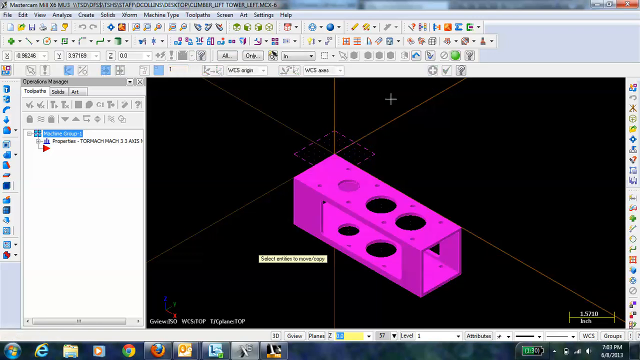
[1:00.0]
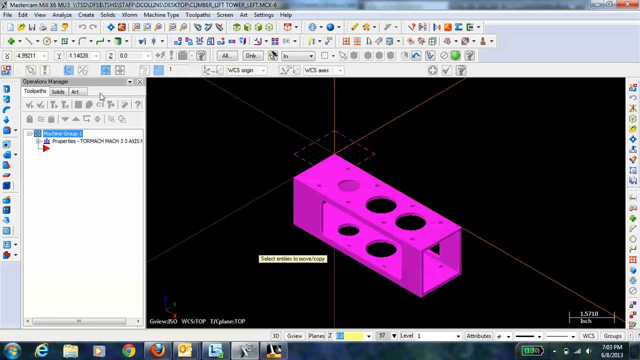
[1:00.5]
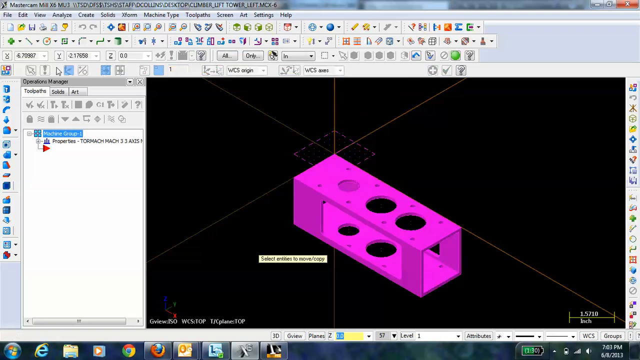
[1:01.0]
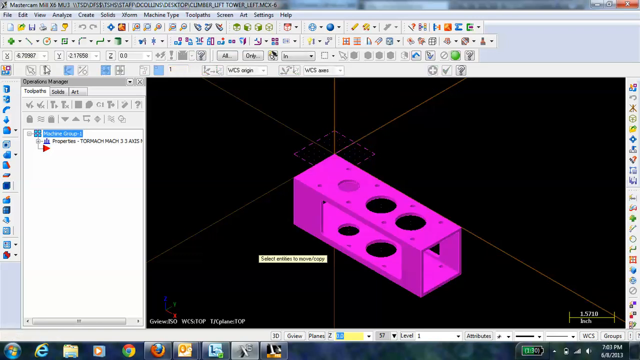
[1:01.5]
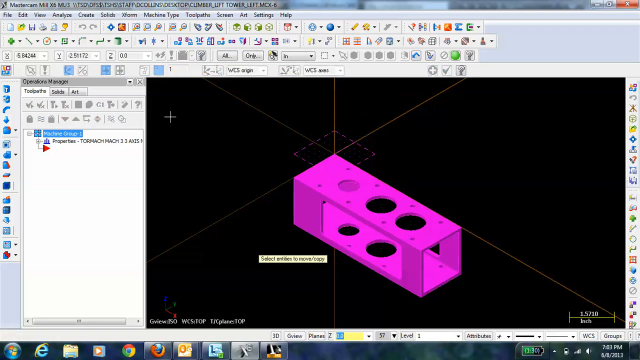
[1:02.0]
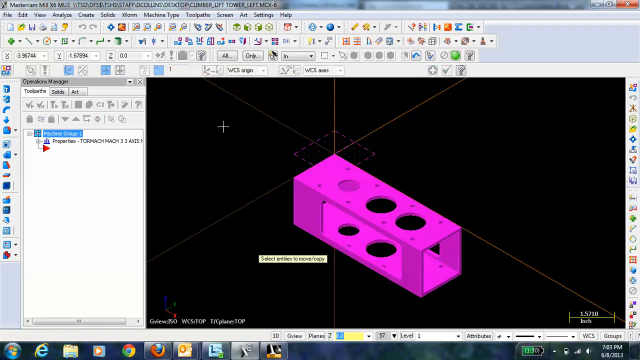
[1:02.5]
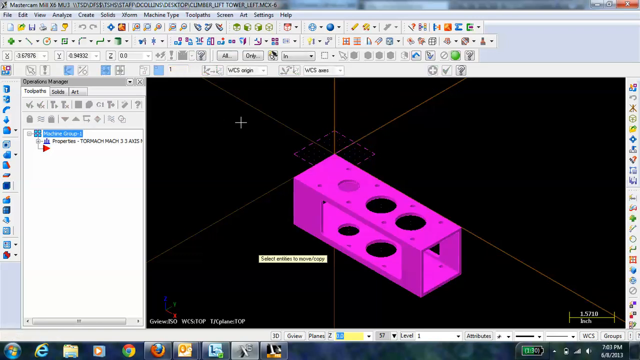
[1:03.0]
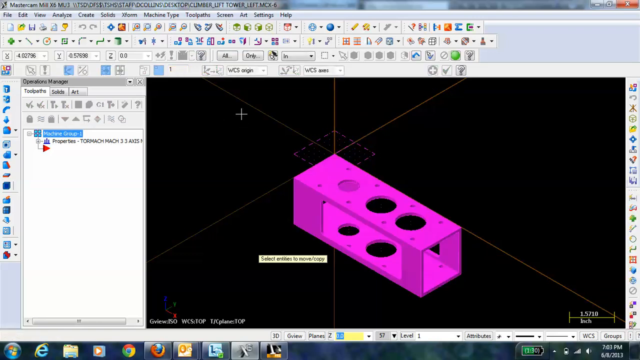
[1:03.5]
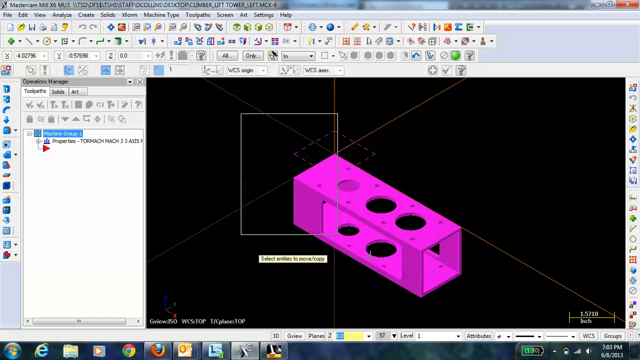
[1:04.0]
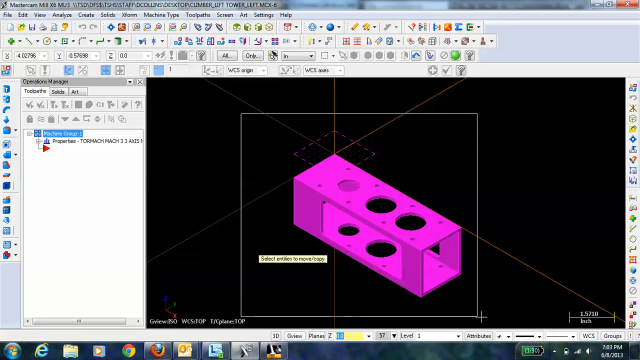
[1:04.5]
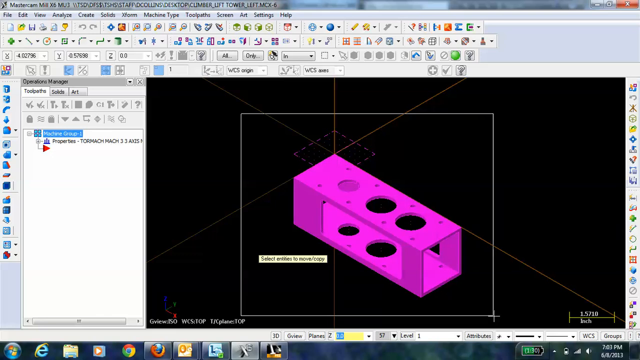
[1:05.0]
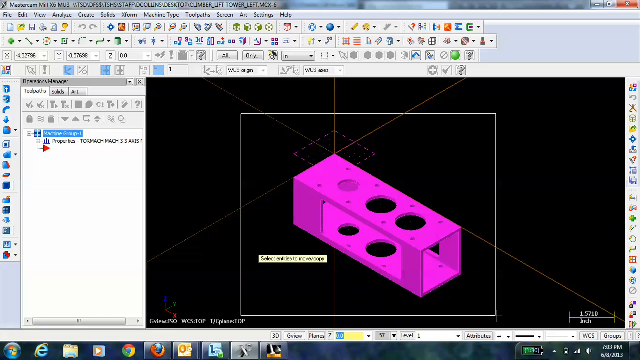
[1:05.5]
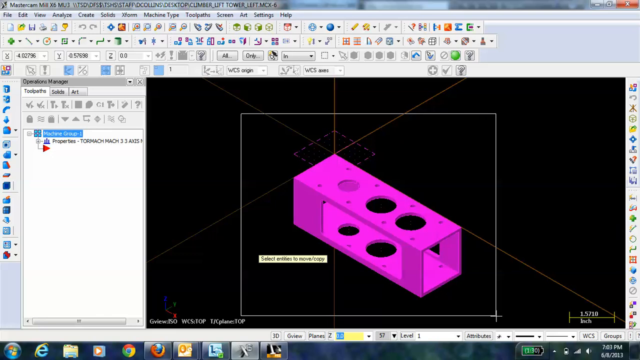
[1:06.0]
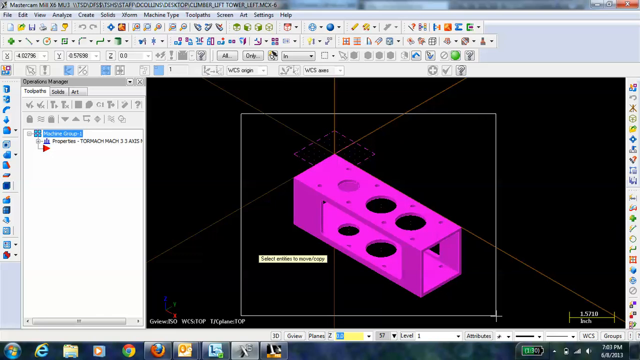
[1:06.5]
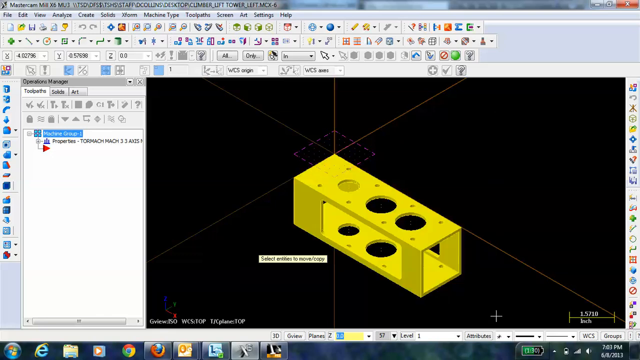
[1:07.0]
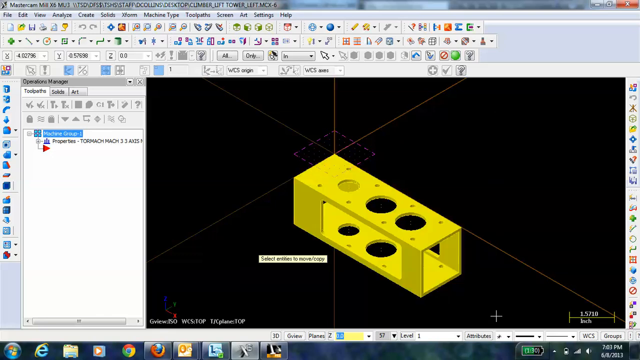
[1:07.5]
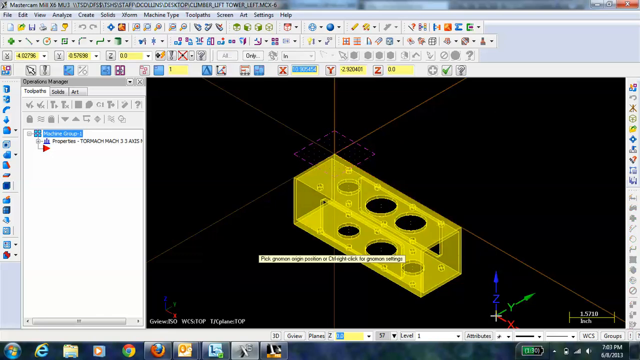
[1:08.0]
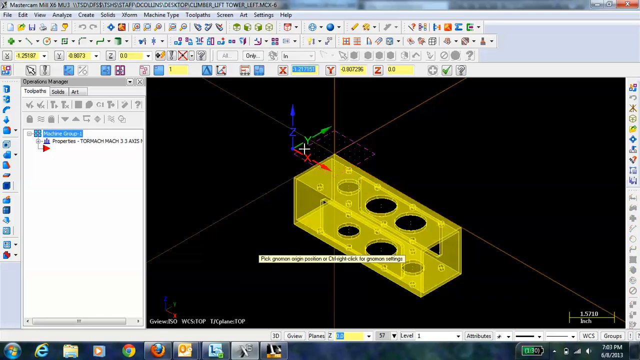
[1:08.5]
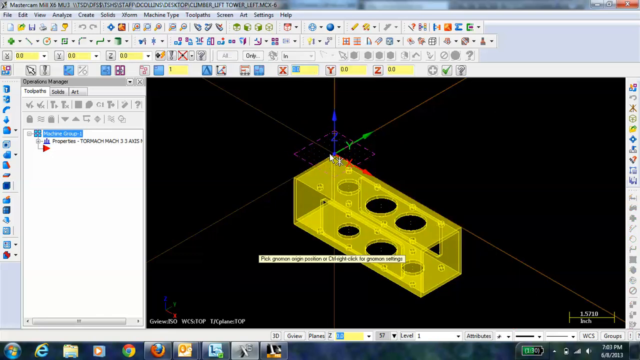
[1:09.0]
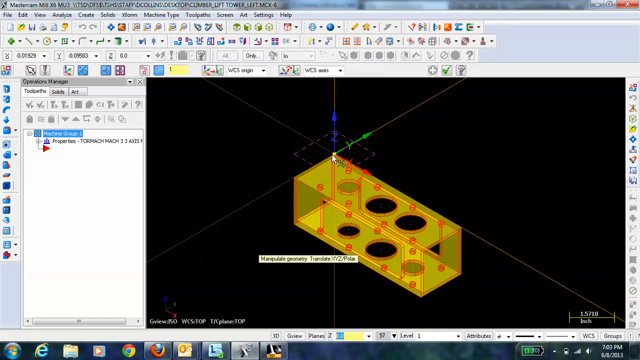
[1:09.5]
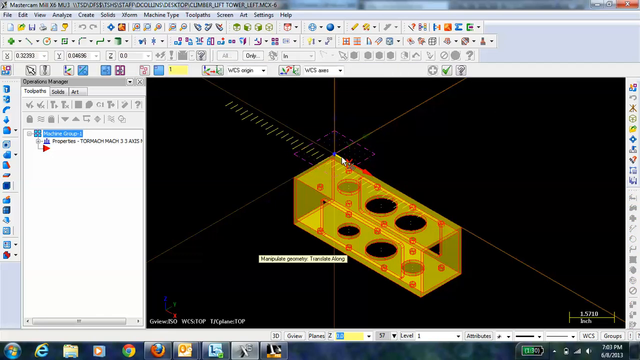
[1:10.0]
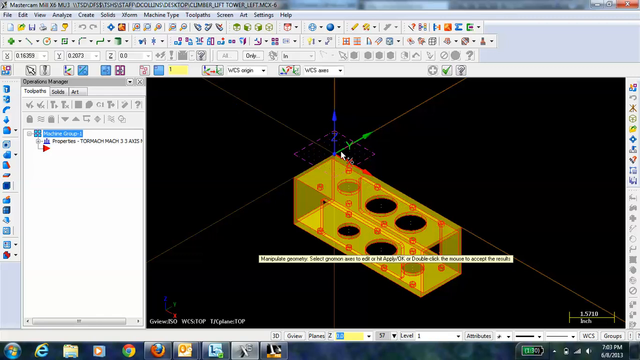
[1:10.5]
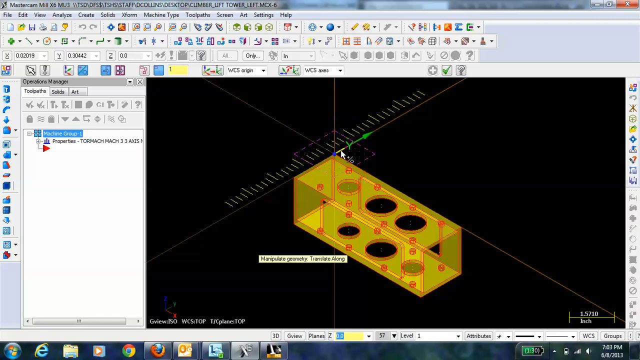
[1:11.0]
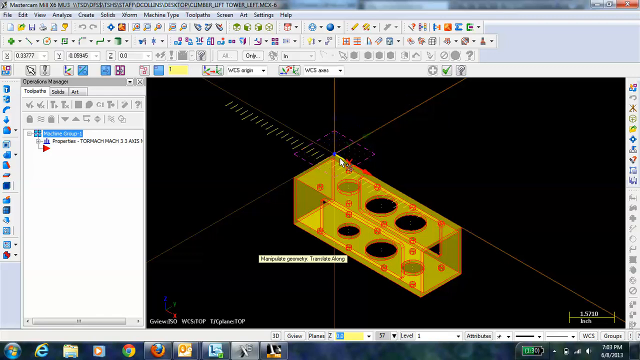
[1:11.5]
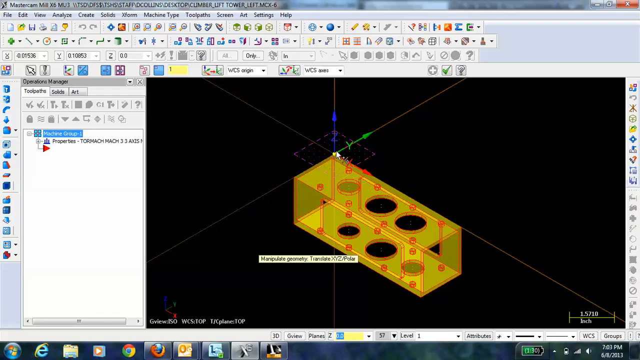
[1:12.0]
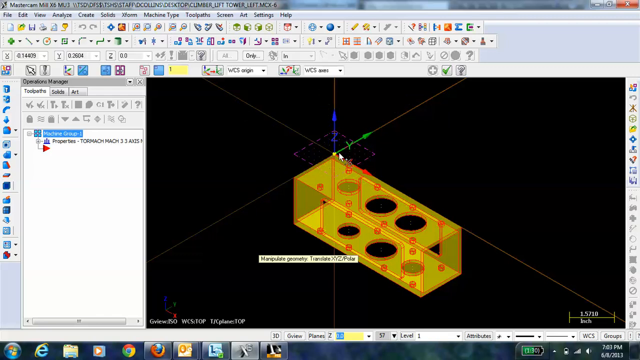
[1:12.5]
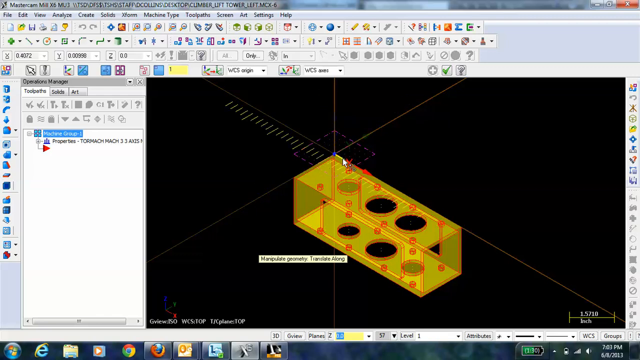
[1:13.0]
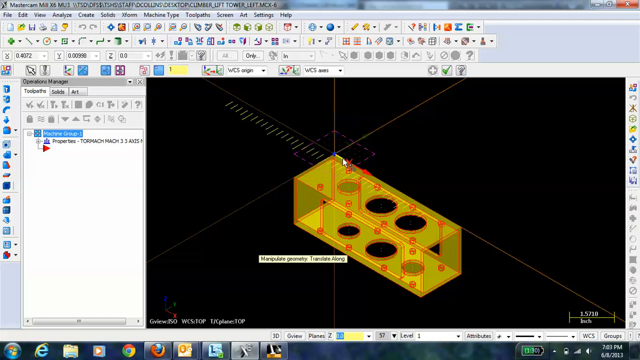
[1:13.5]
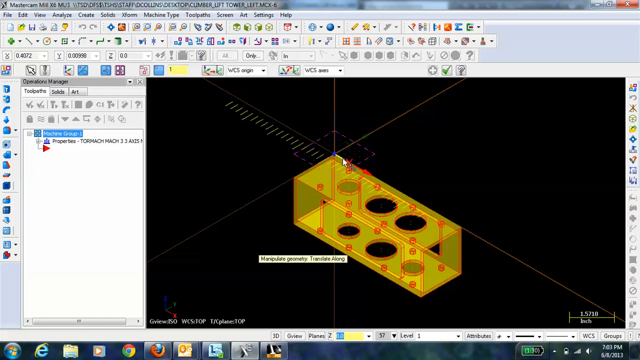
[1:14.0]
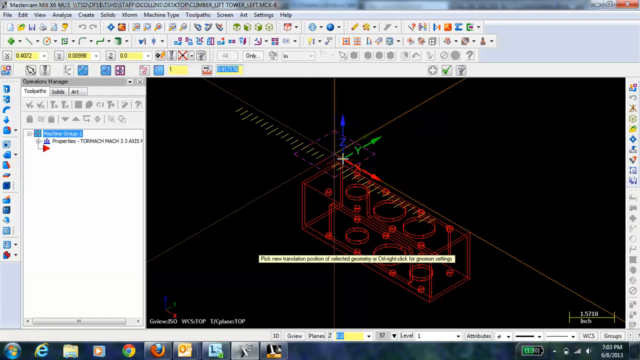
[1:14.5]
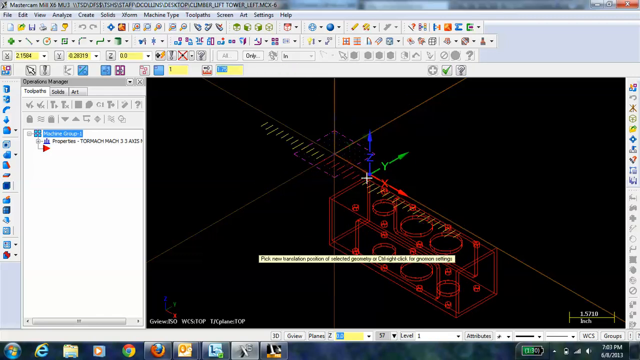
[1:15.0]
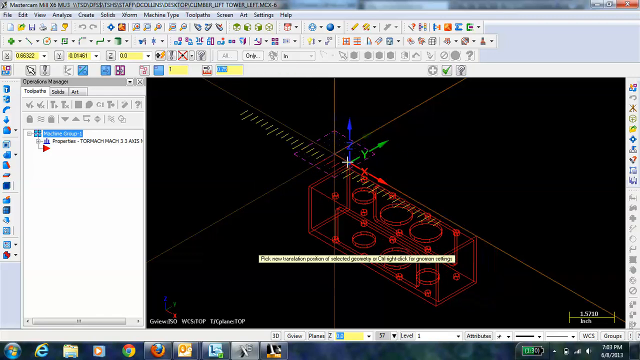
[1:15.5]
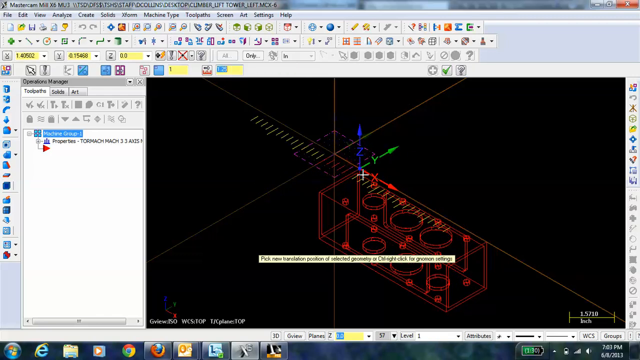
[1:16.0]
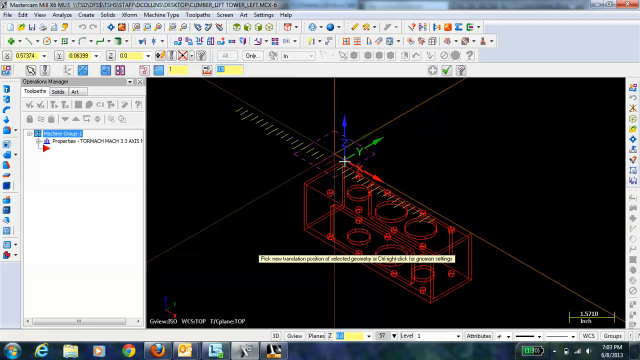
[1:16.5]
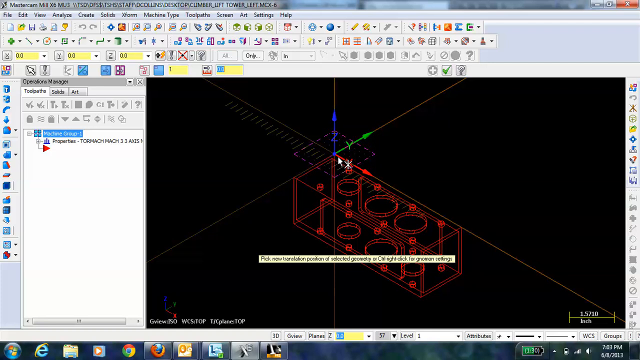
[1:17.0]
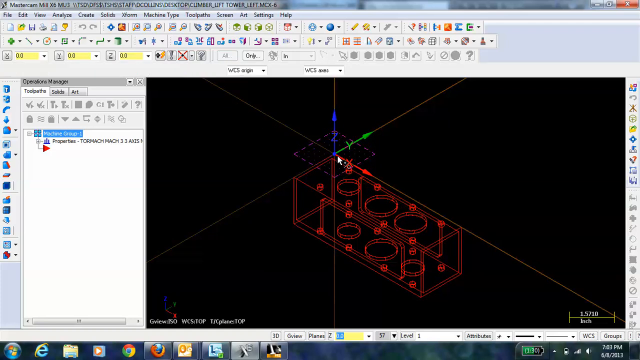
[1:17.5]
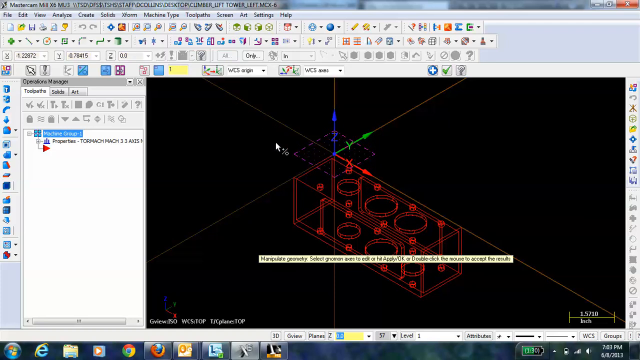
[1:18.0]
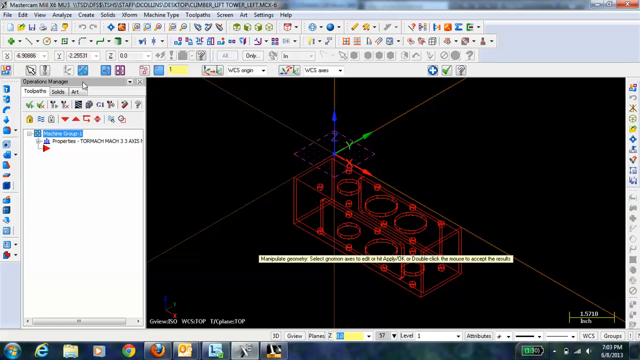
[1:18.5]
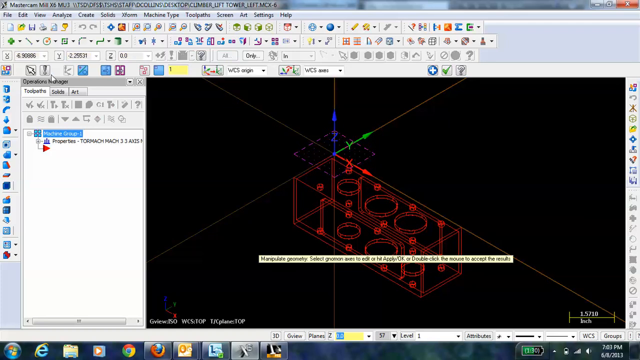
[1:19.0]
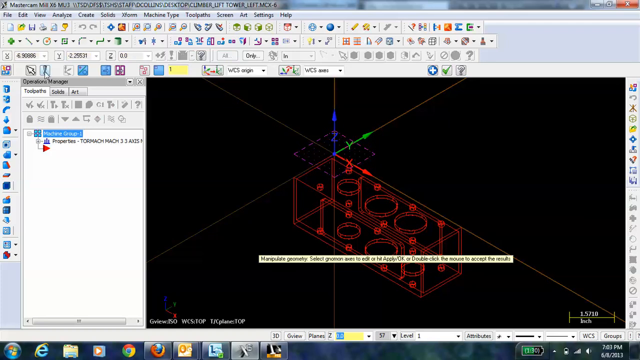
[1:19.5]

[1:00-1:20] The object is hot pink and solid, no longer translucent. He moves up to an option underneath the meter that shows the exact position on the x-axis, and clicks an exclamation mark button underneath that. He moves back to the black workspace and drags a box around the solid pink object, which turns translucent yellow again. He drags the x, y, z-axis up onto the corner of the box and clicks it again, and it becomes the measurement meter. He flips it along the y-axis, then along the z-axis, then on the x-axis, and then up to the z-axis again, with the meter following the lines of those axes. He drags it along the x-axis back and forth until it goes to the initial anchor point. He clicks it again, goes back to settings, and clicks the exclamation mark again, at which point it becomes hot pink again.